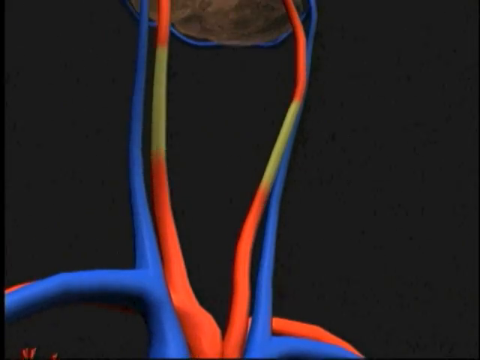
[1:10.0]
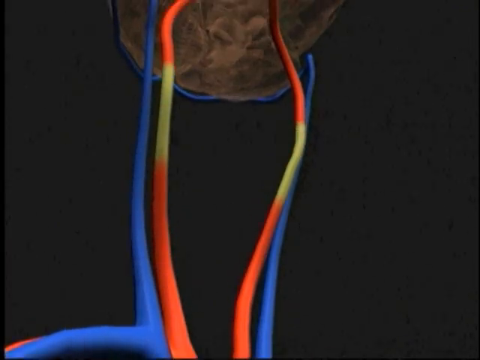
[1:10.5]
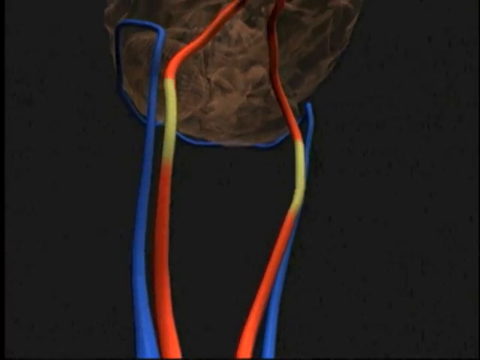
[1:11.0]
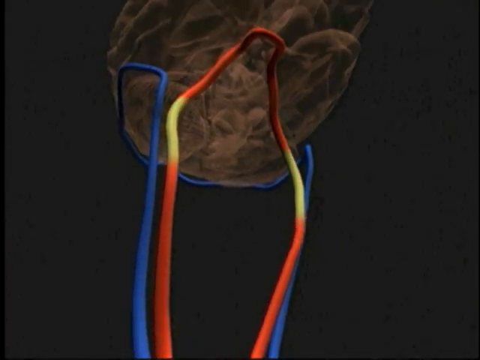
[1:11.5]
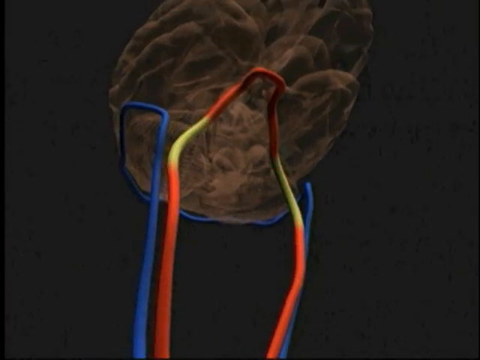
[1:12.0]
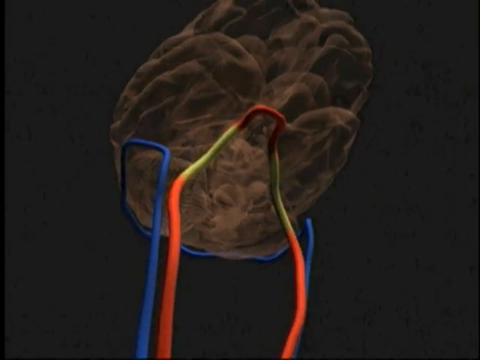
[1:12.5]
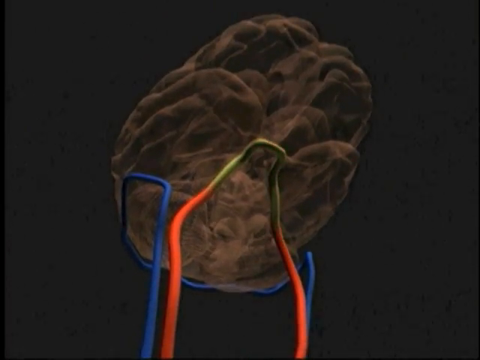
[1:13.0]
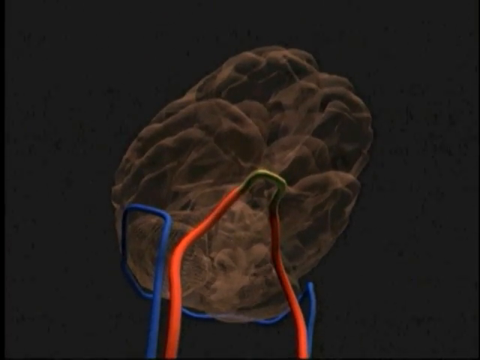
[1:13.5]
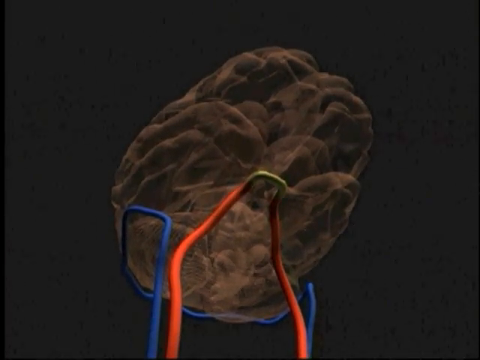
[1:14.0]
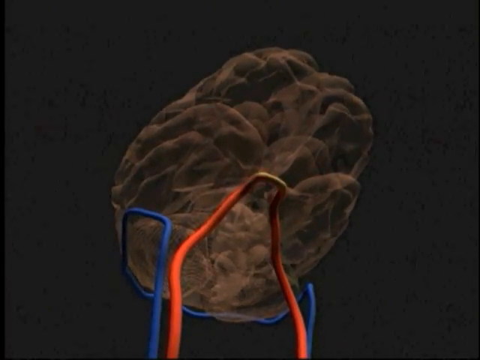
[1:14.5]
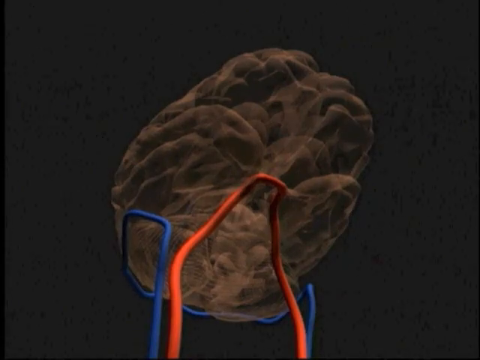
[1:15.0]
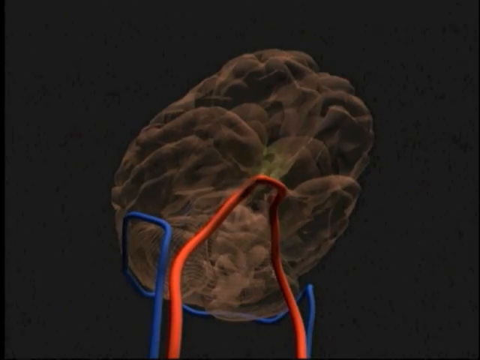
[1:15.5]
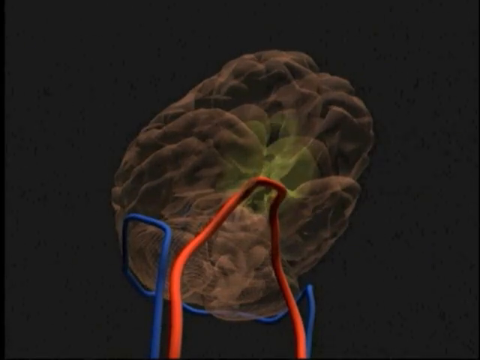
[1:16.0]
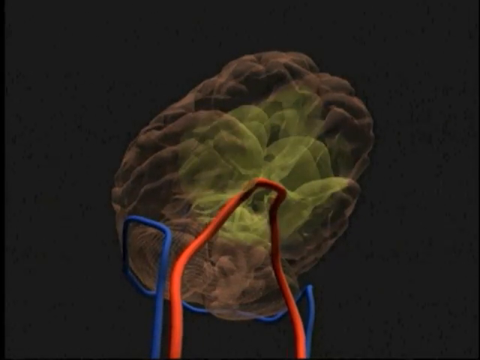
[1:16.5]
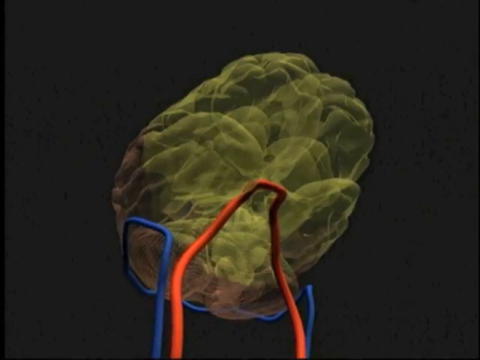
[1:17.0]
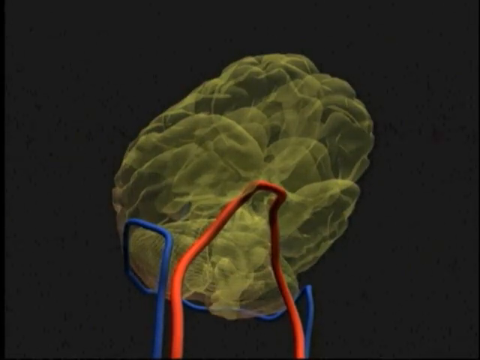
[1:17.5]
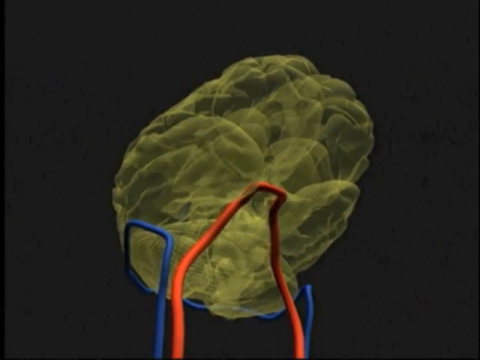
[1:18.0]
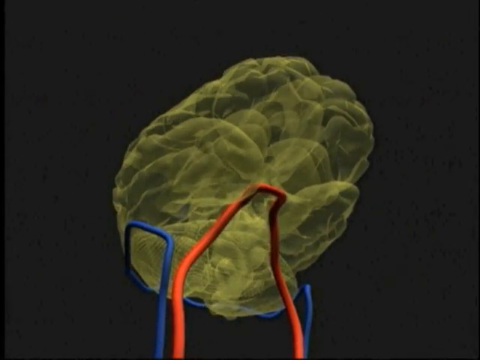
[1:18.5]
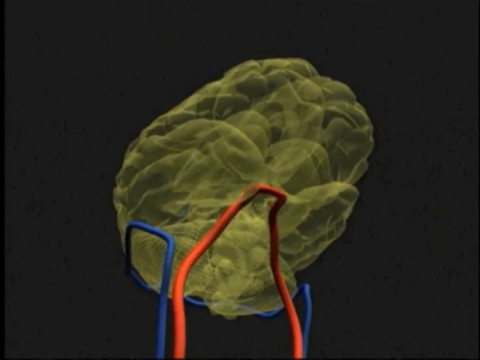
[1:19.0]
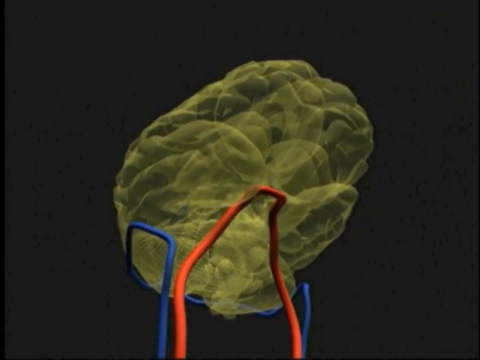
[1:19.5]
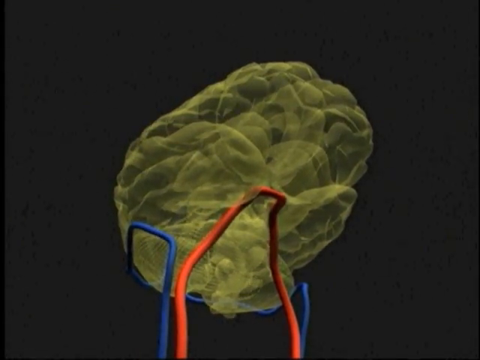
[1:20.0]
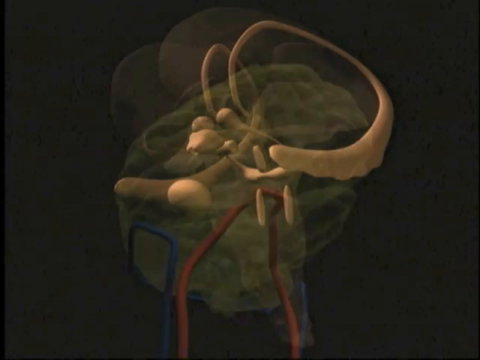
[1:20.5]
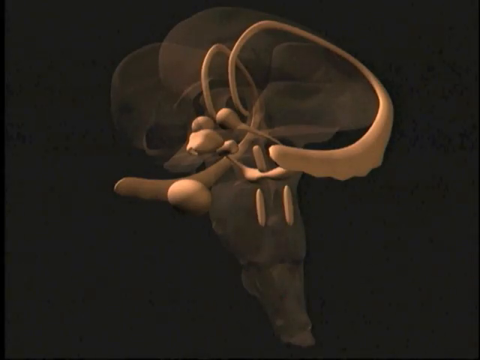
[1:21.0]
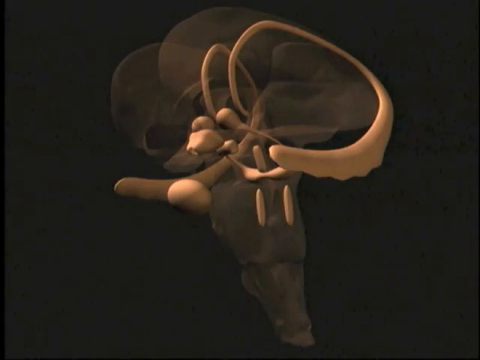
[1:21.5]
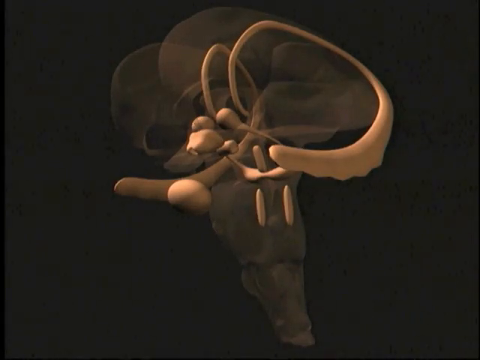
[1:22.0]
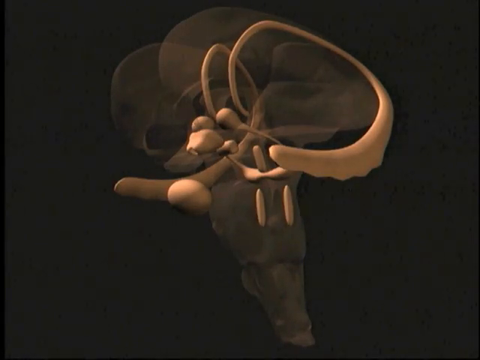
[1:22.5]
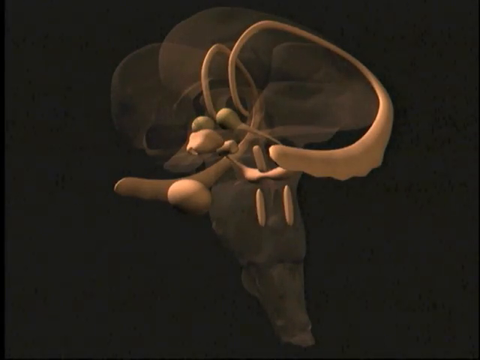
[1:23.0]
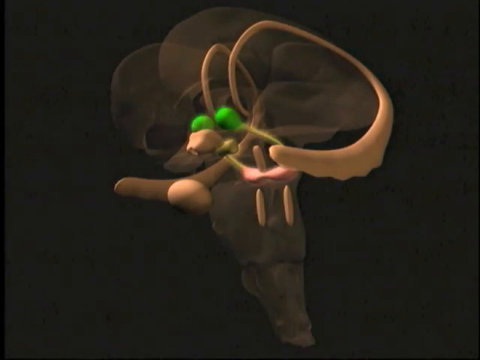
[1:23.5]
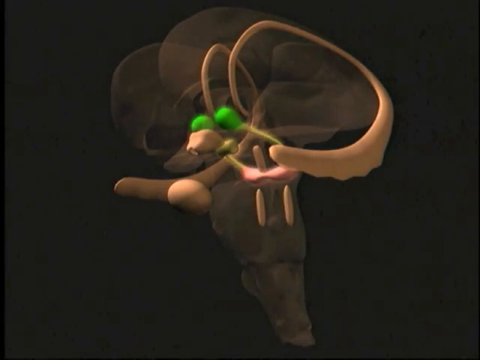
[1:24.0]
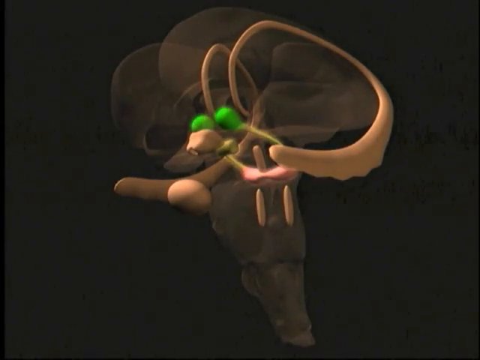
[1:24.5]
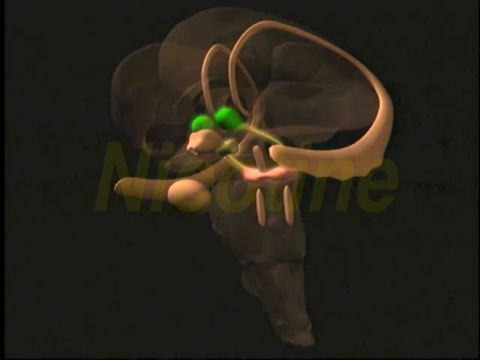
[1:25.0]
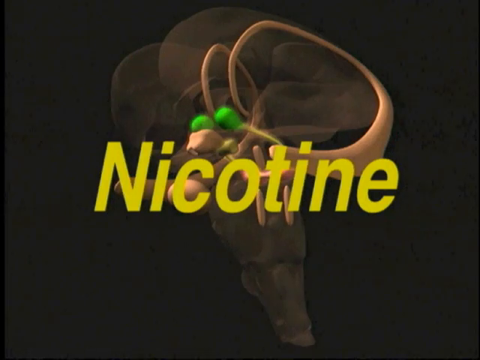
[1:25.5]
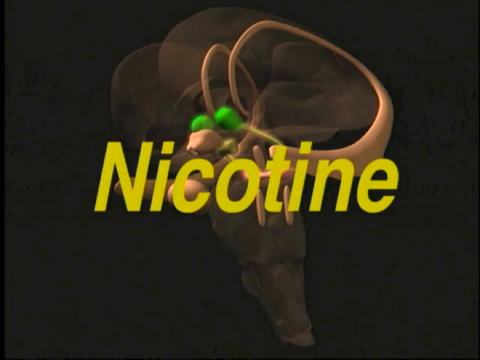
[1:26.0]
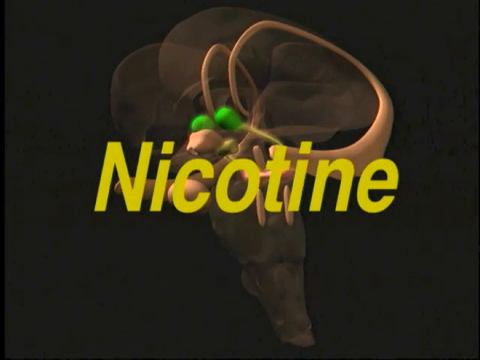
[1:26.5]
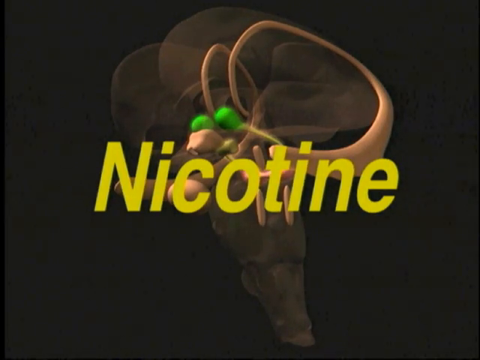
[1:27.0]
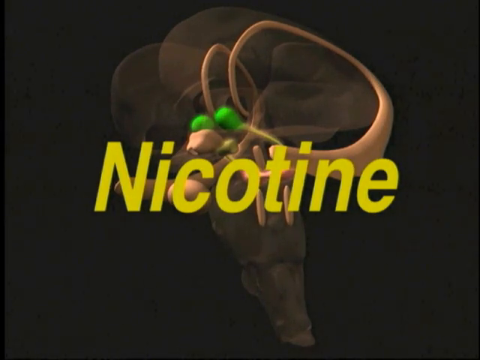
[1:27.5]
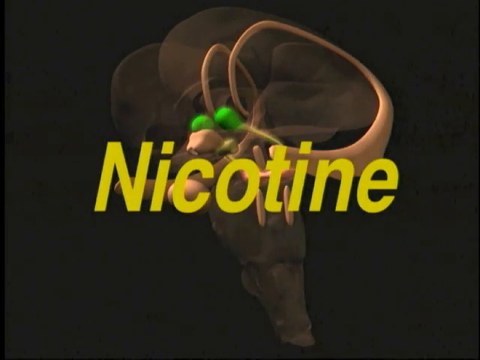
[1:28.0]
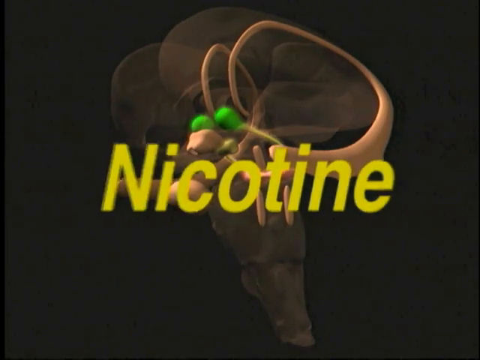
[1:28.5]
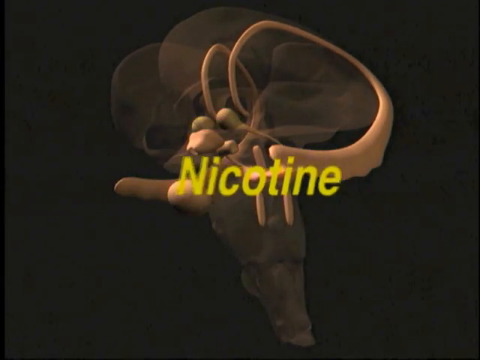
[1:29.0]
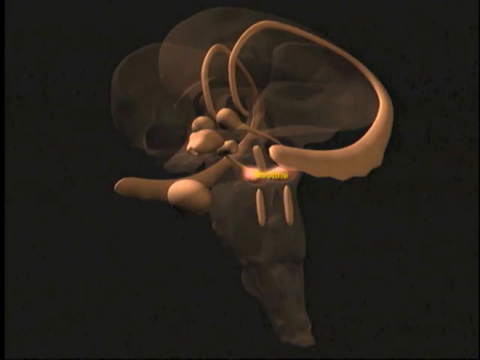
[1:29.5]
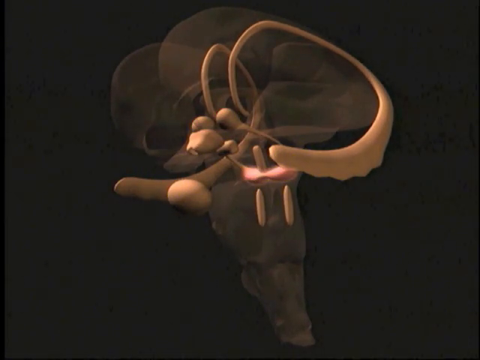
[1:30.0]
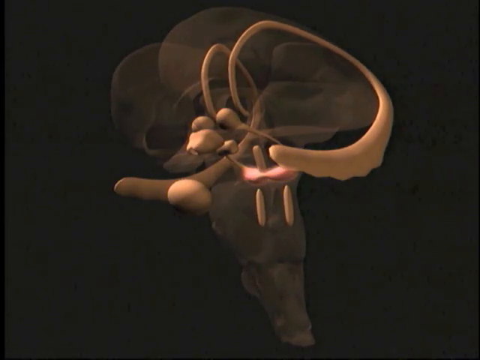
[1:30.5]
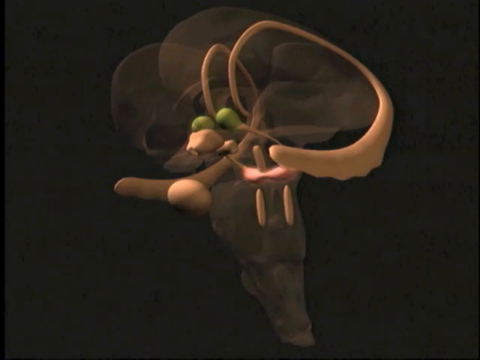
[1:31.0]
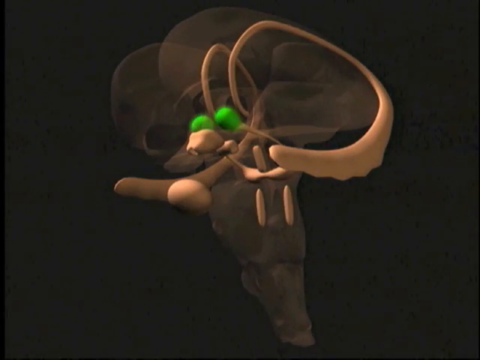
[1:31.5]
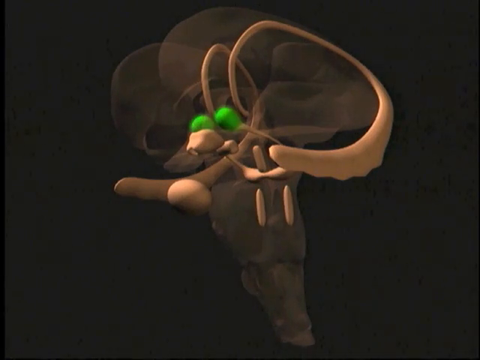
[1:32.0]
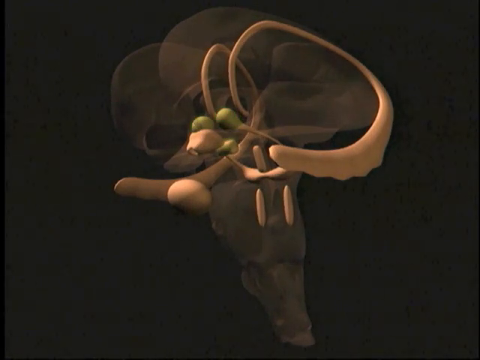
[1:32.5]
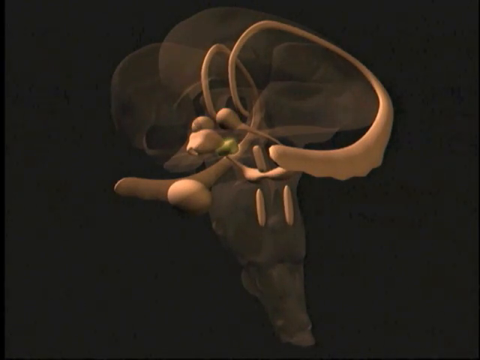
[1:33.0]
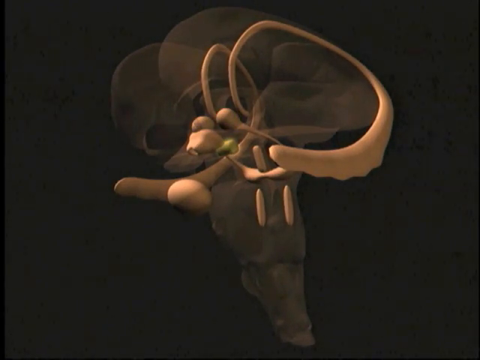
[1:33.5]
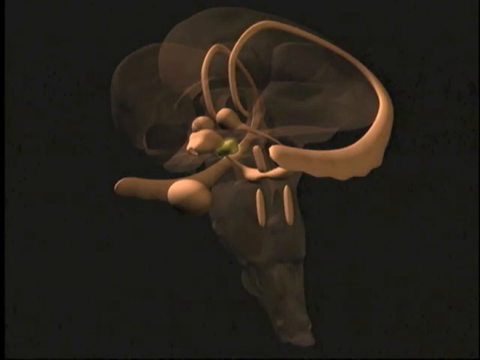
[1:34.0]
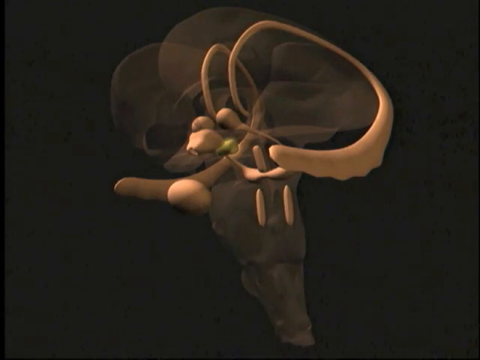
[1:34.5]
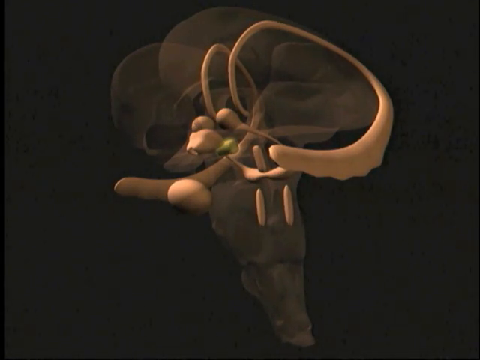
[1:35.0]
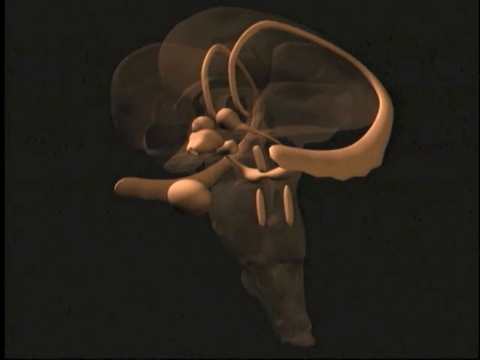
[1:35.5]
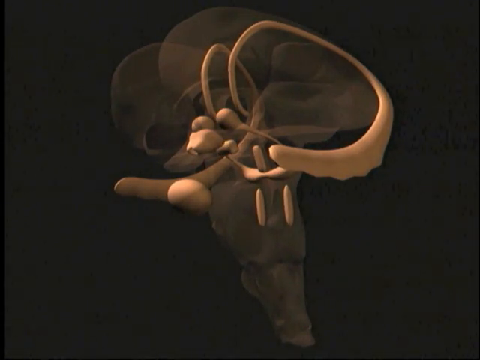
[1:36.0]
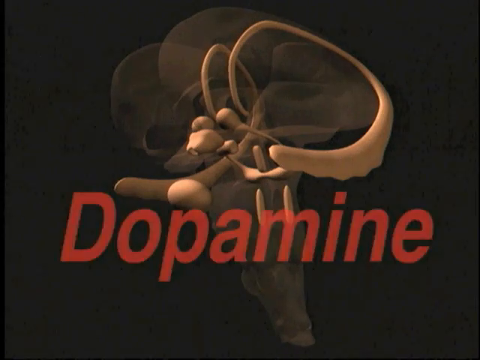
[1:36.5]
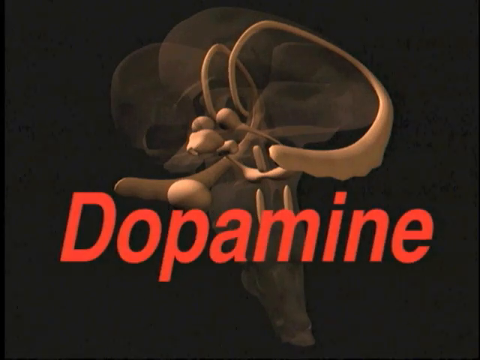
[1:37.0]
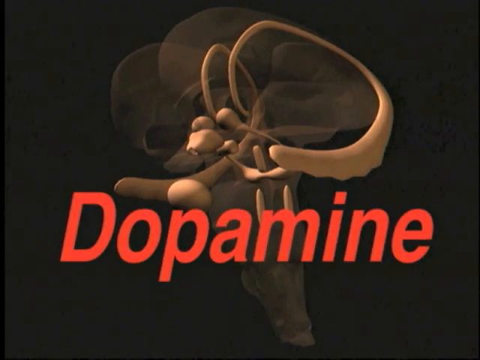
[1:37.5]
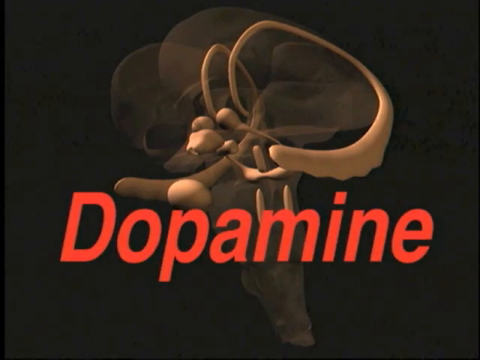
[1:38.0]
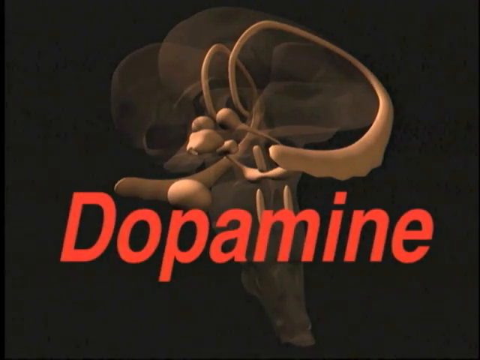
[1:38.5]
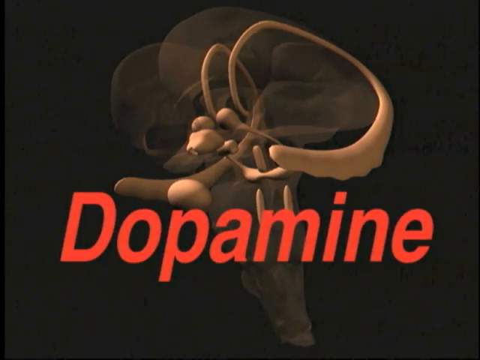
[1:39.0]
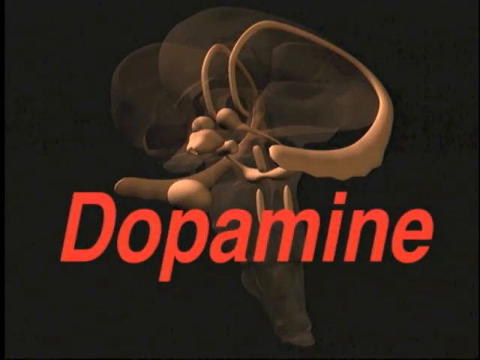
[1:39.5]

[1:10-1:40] The yellow climbs up tubes that connect to the brain and reaches the very top, where it almost looks like it disappears but instead crosses into the brain, apparently representing crossing the blood-brain barrier, and the yellow fills the entire brain. The scene cuts to an internal view of receptors, probably dopamine receptors, where two receptors turn green and yellow text underneath reads "nicotine". That text fades away, the two receptors are shown again, and below them another receptor with a slight yellow tint, probably representing the nicotine, appears with red text reading "dopamine".